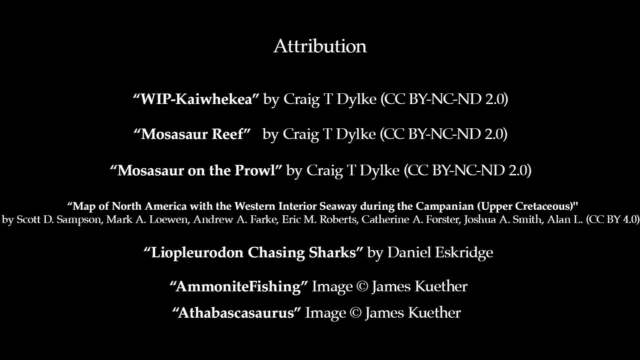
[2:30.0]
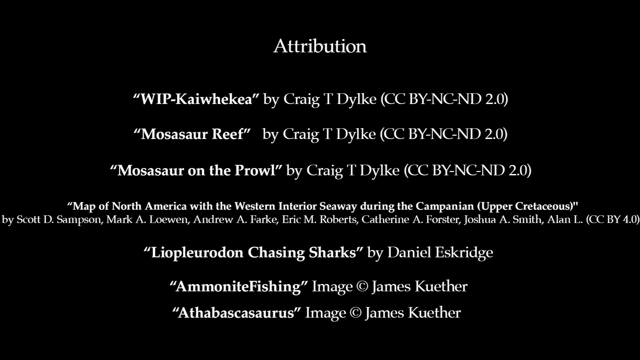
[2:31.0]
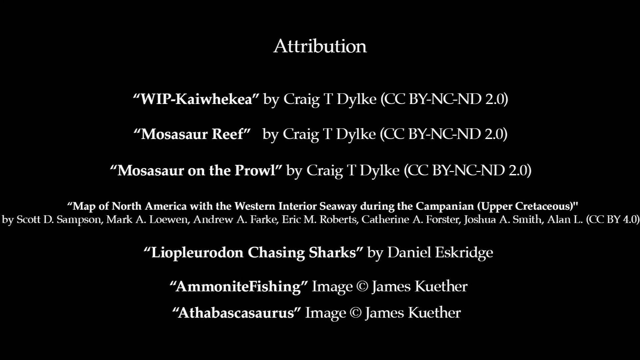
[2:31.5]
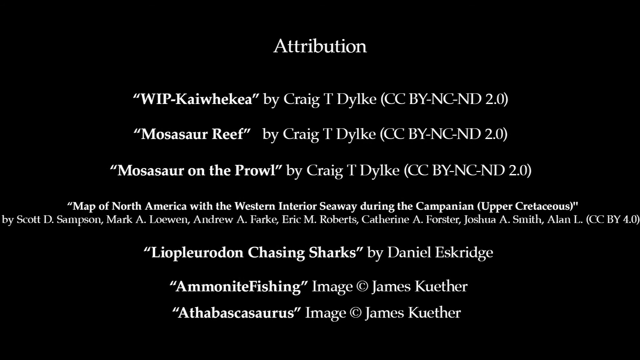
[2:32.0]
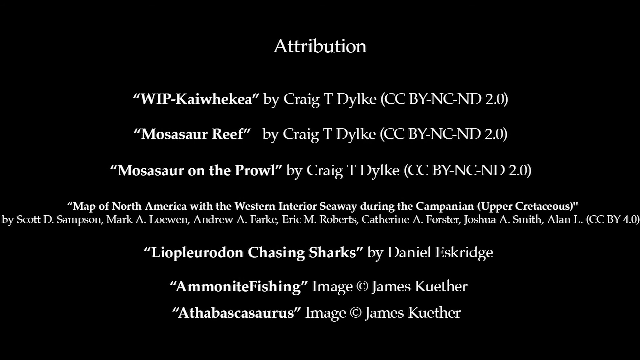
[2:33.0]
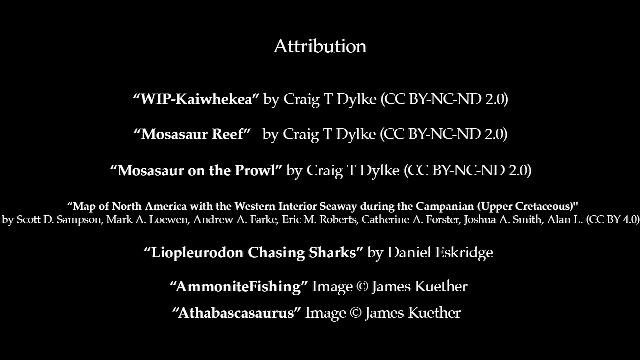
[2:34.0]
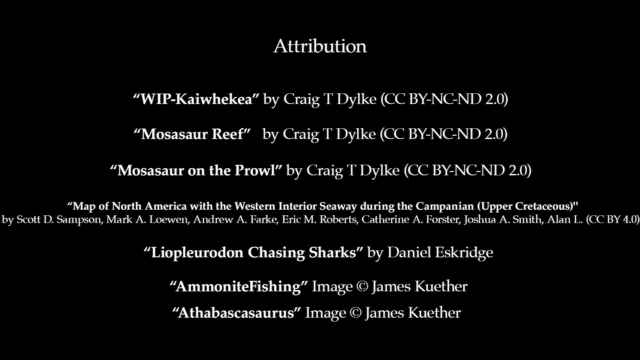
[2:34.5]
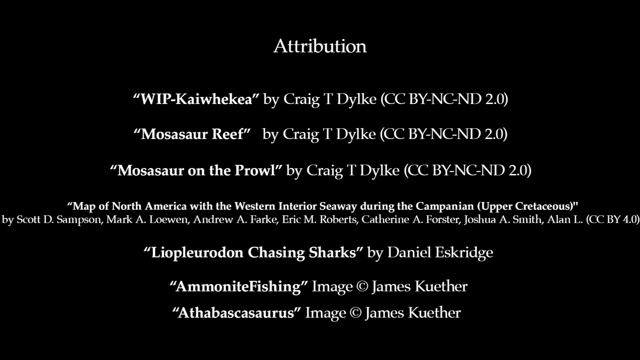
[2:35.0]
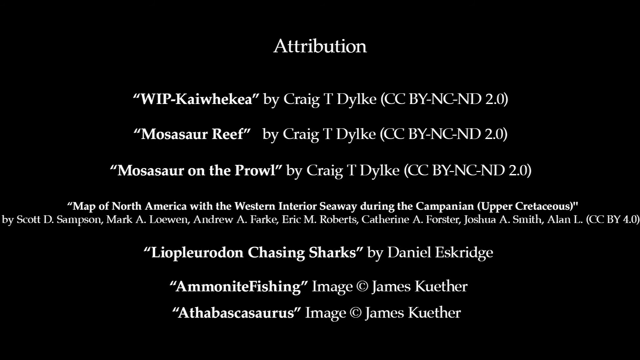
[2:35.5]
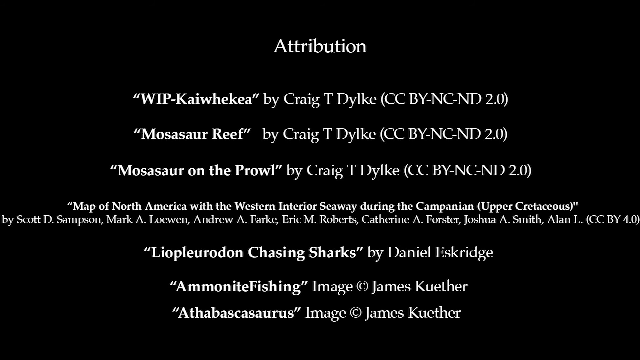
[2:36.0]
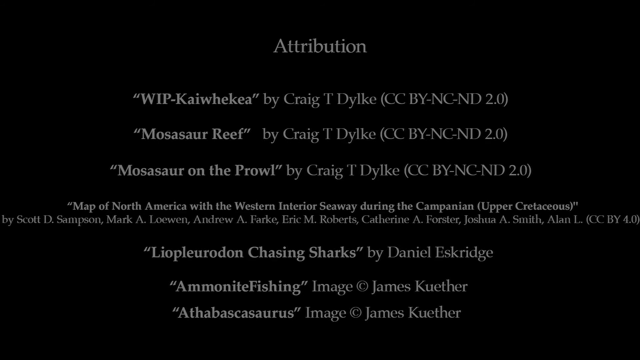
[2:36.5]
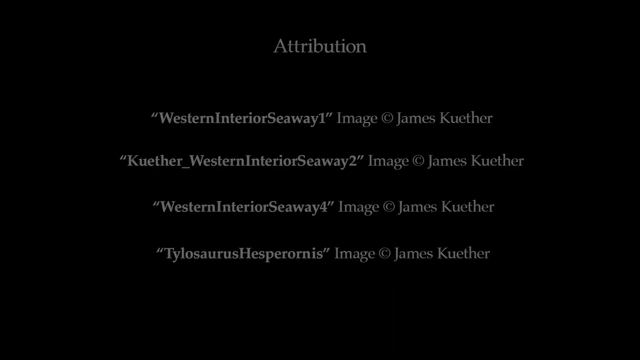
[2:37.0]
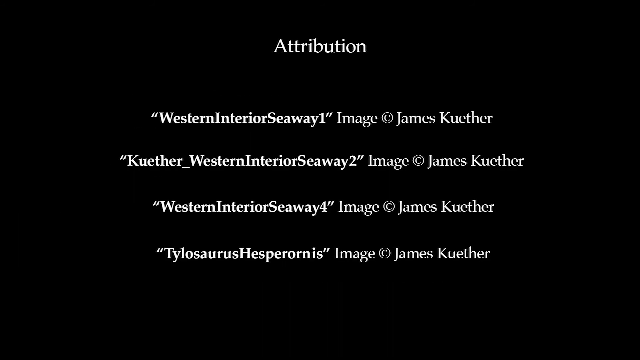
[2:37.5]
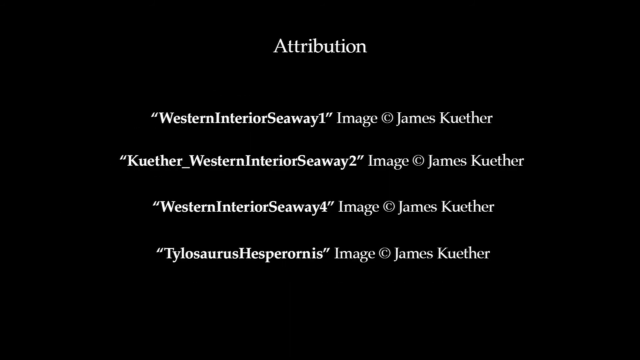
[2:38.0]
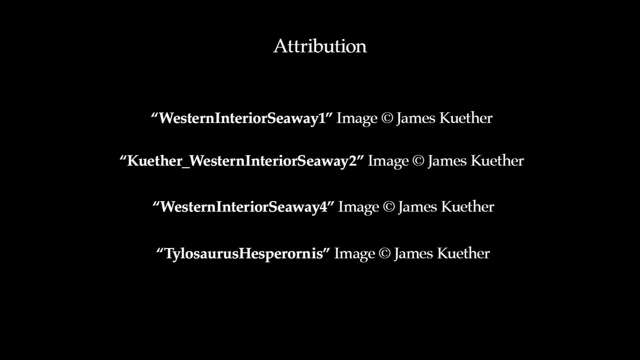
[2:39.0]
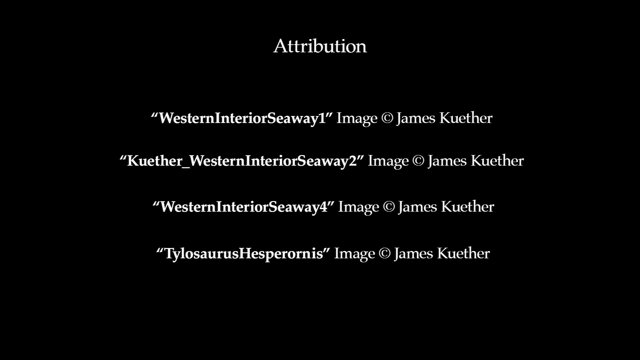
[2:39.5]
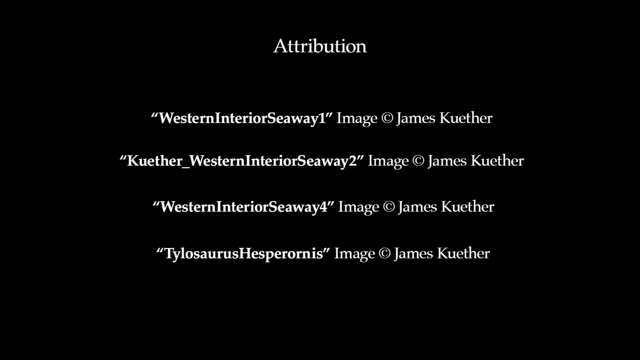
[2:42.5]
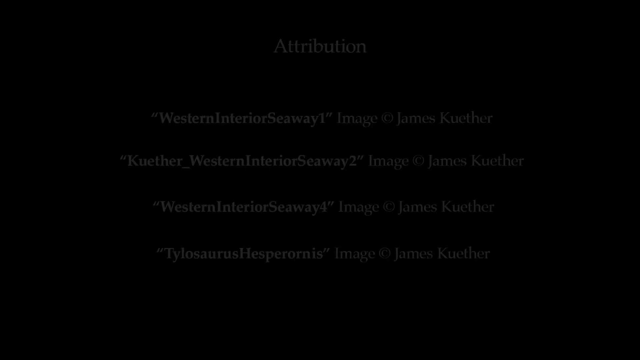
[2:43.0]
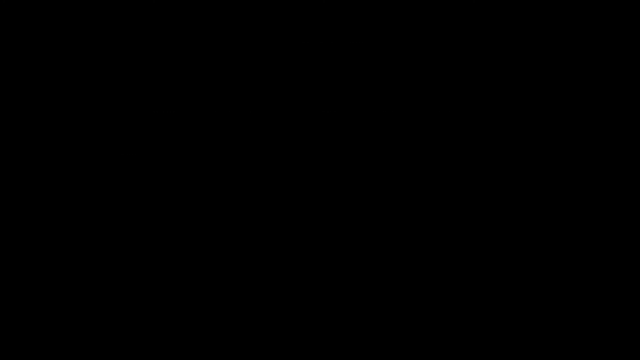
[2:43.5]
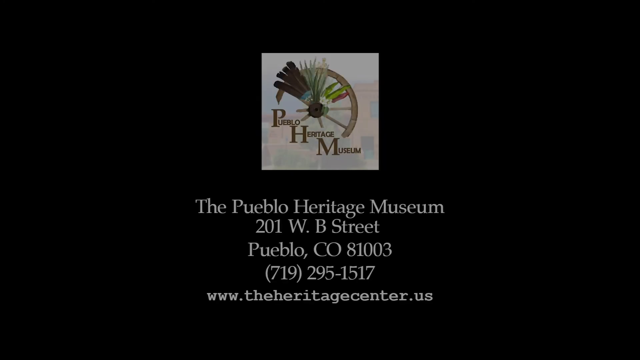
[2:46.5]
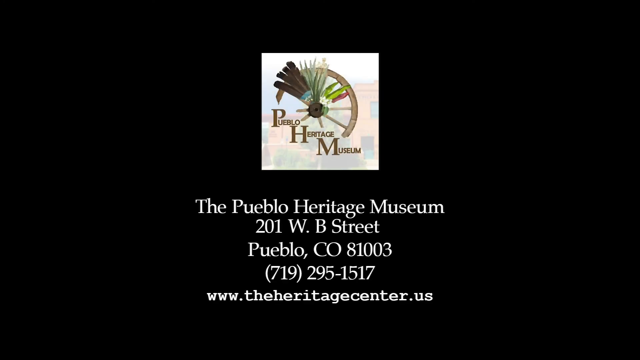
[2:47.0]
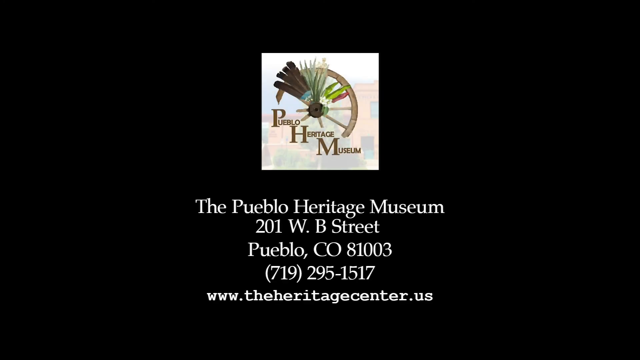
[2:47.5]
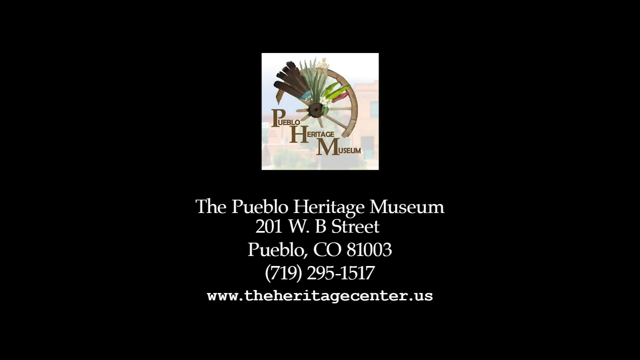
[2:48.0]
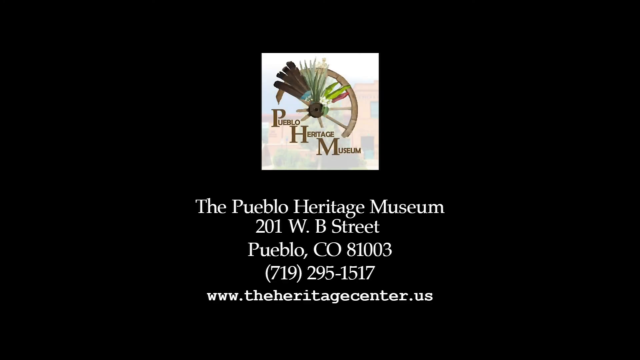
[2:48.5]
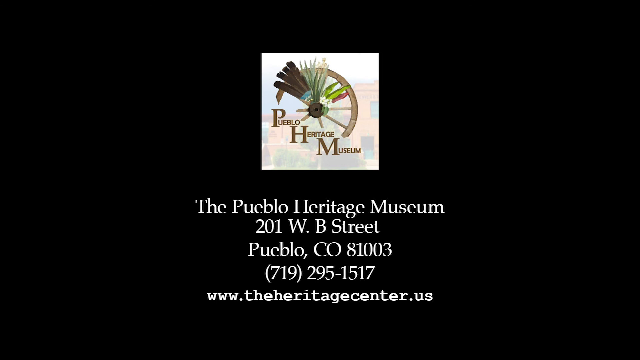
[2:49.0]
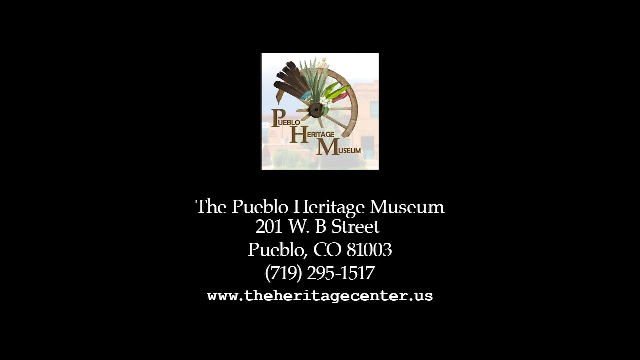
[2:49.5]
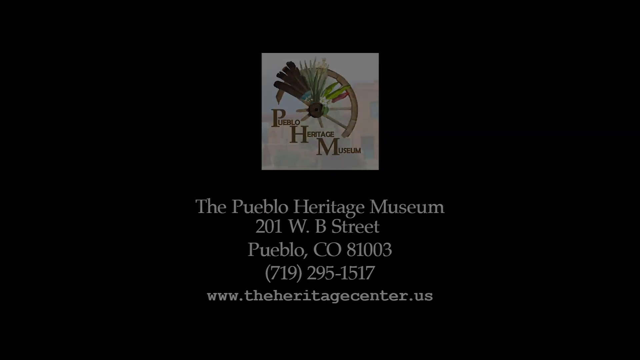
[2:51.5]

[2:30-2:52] More credits appear, on a page titled "Attribution" at the top, with seven lines that seem to be image descriptions. Three are by a person named Craig T. Dico, followed by a parenthesis reading "CC BY-NC-ND 2.0"; their titles in quotes on the left read "work in progress", "Mosasaur reef" and "Mosasaur on the prowl". Of the other four, one is very long and reads "map of North America was the western interior seaway during the Campanian" with "upper Cretaceous" in brackets, perhaps referring to the map shown earlier; it is by Scott B. Sampson, Mark A. Lowen, Andrew A. Fark, Eric M. Roberts, Catherine A. Foerster, Joshua A. Smith and Allen L., "CC BY 4.0". The next is "Leo Plerodon chasing sharks" by Daniel Eskridge. The last two are by James Kuether: "AmmoniteFishing" and "Athabascasaurusr".